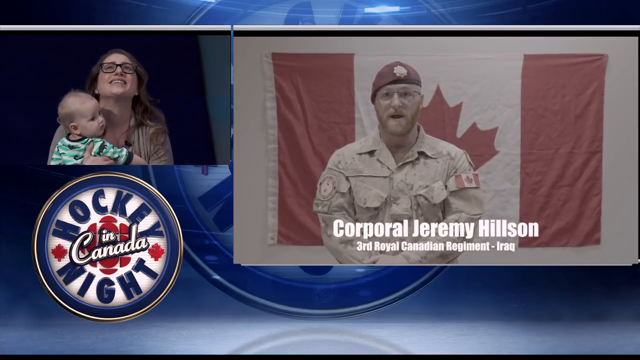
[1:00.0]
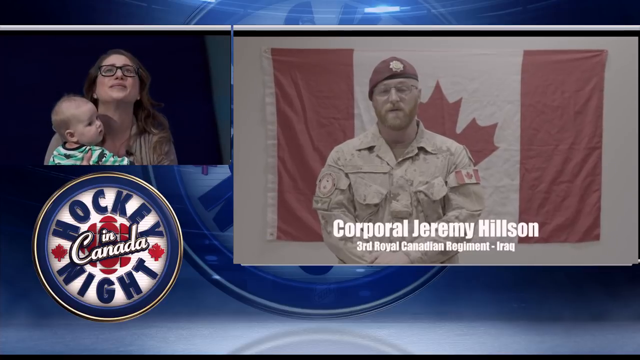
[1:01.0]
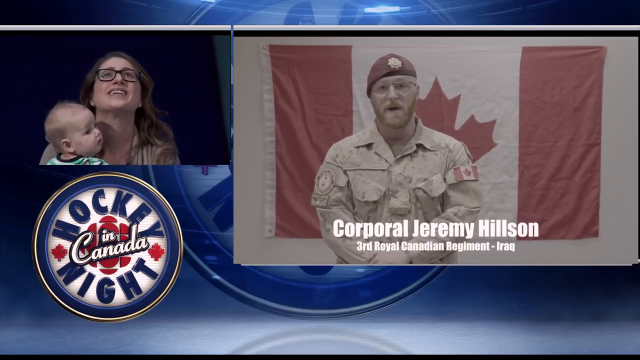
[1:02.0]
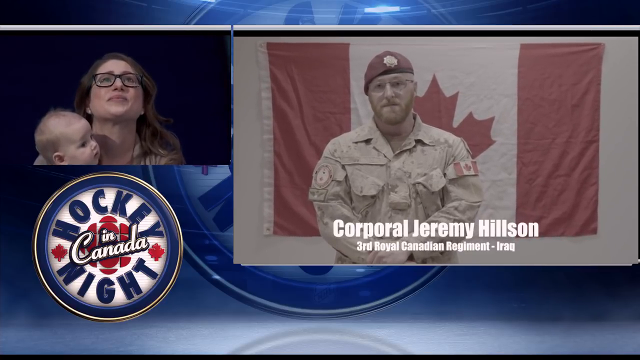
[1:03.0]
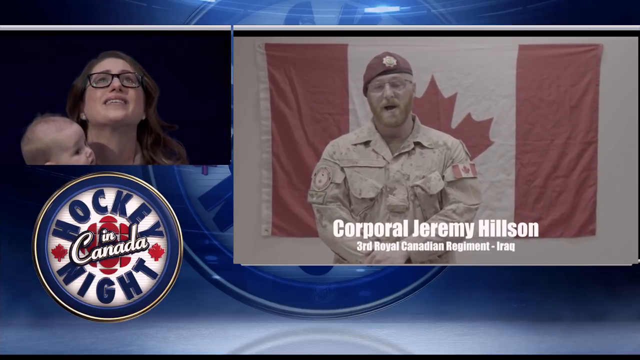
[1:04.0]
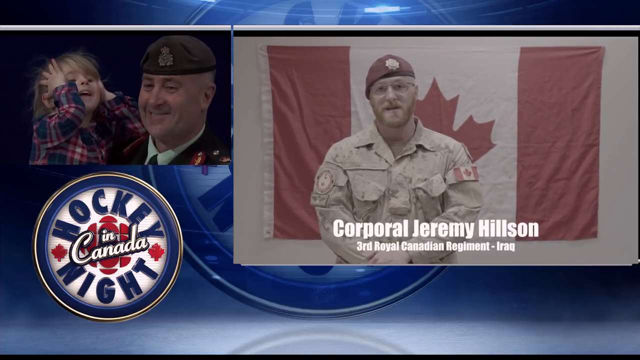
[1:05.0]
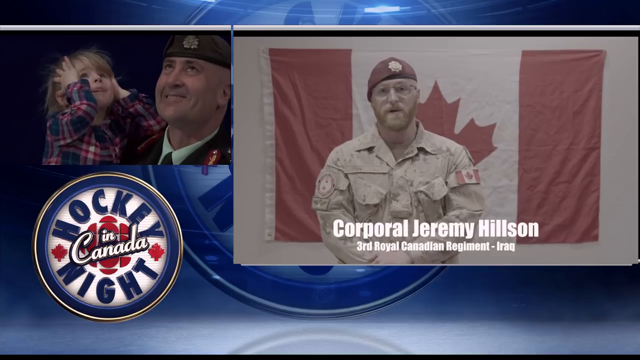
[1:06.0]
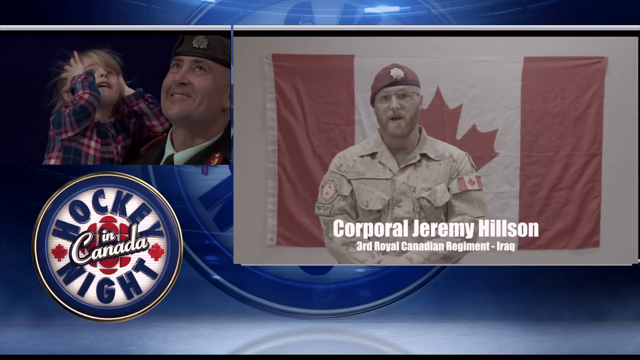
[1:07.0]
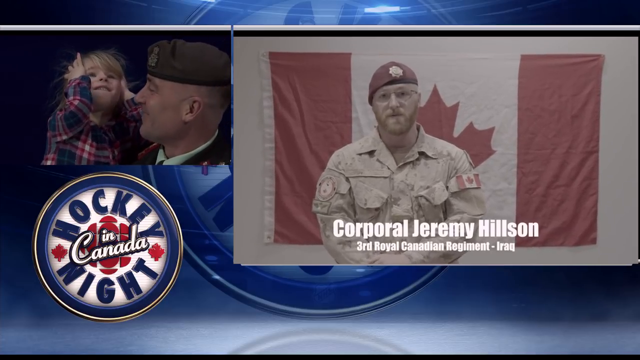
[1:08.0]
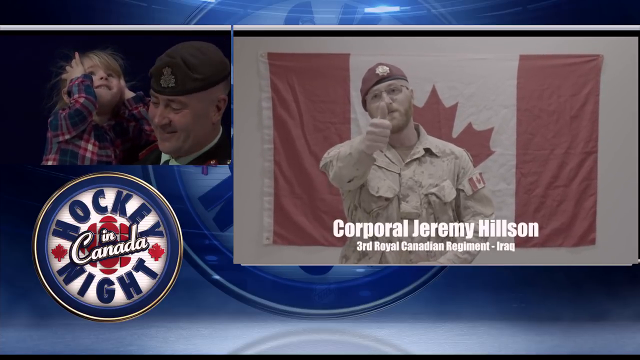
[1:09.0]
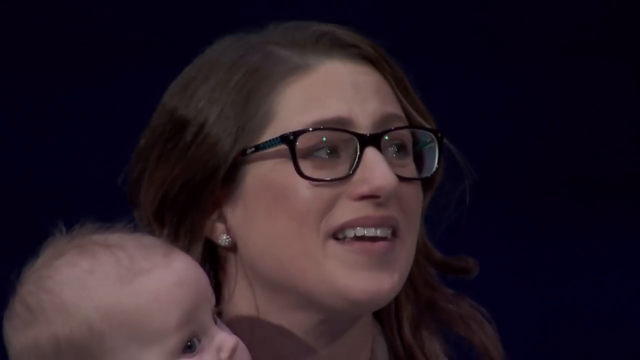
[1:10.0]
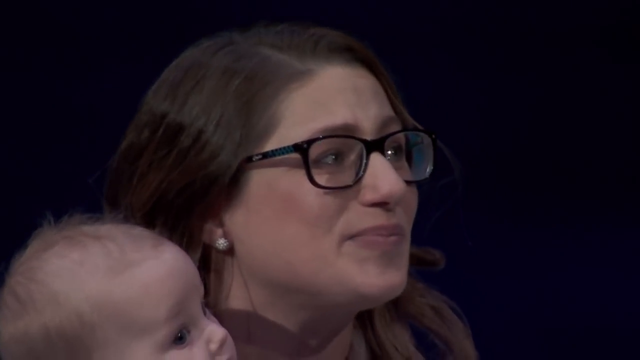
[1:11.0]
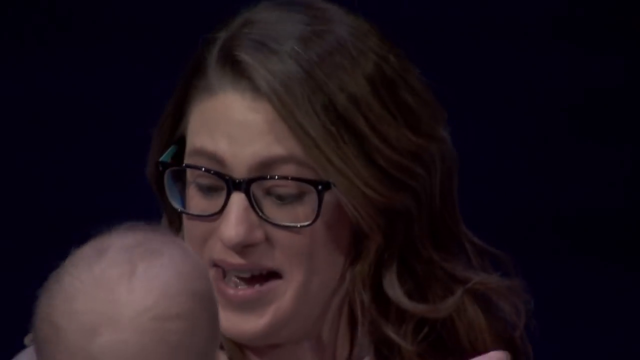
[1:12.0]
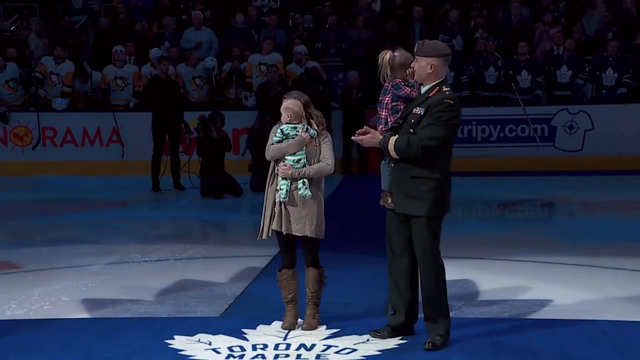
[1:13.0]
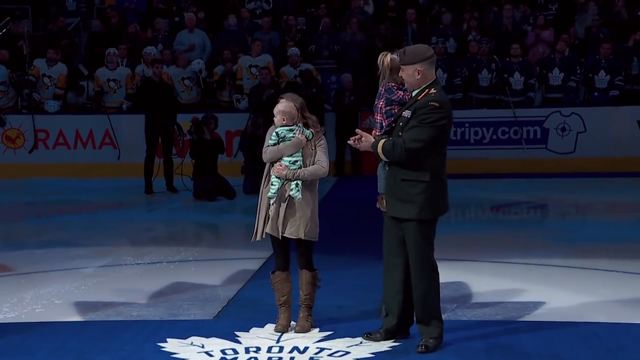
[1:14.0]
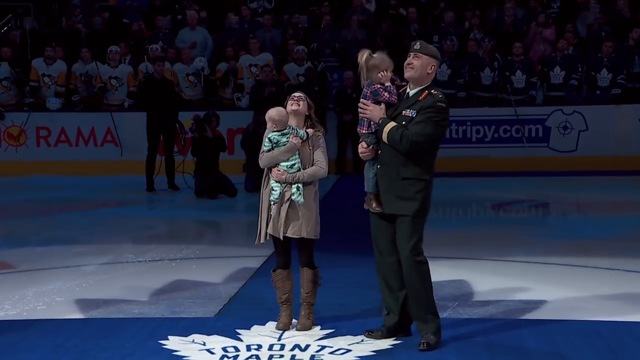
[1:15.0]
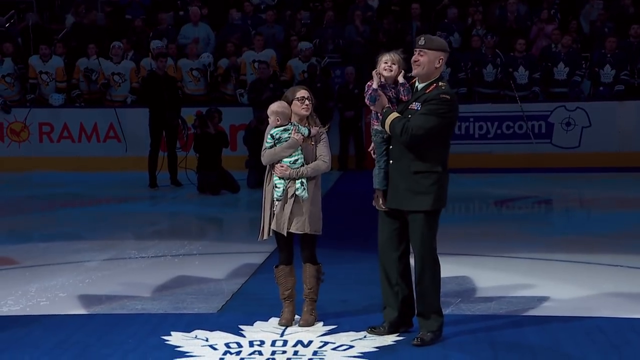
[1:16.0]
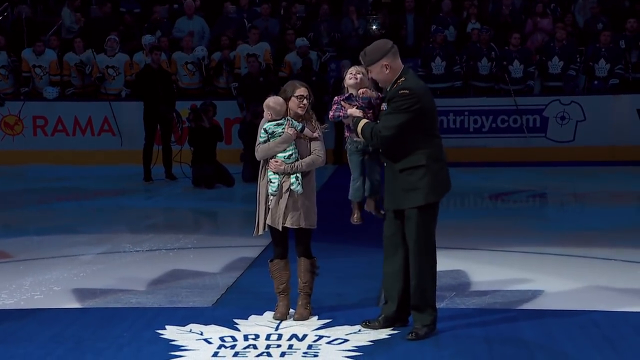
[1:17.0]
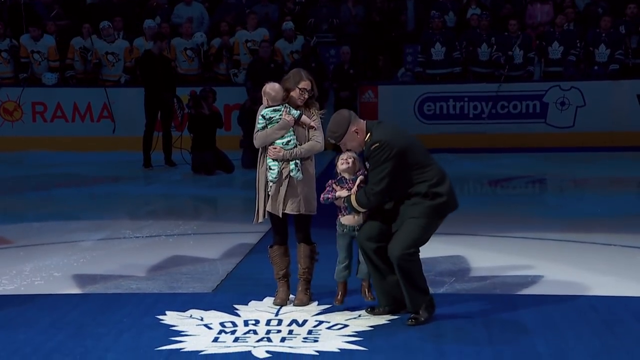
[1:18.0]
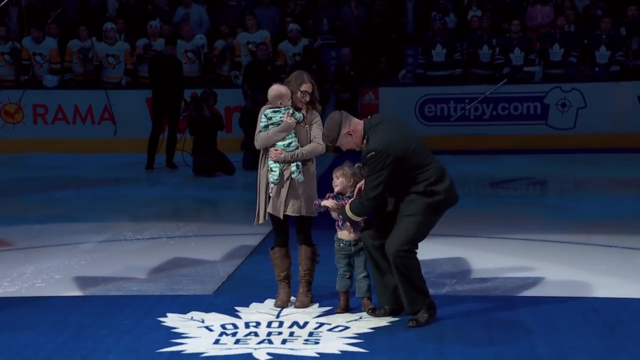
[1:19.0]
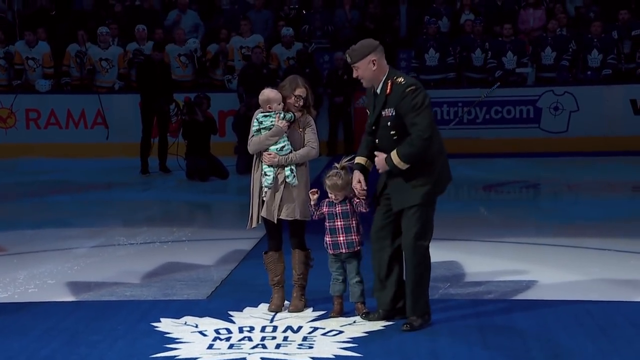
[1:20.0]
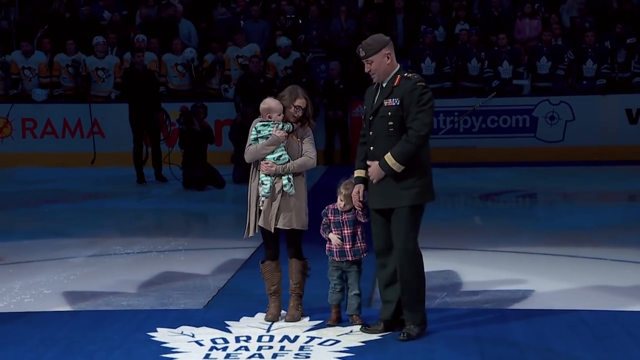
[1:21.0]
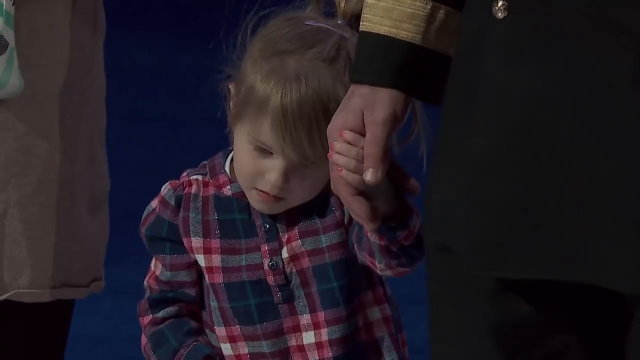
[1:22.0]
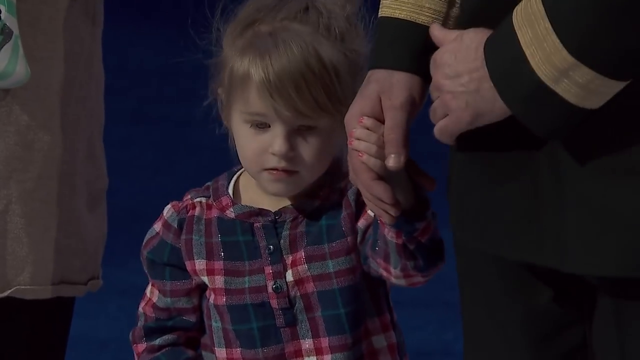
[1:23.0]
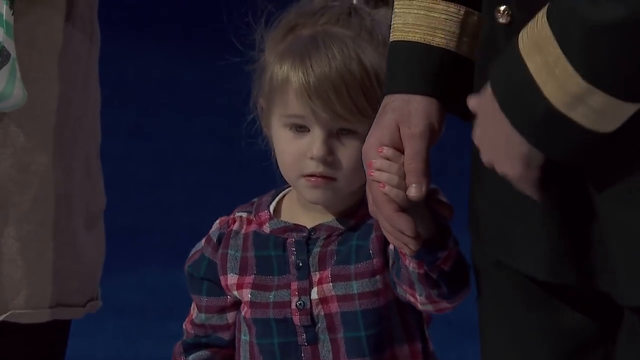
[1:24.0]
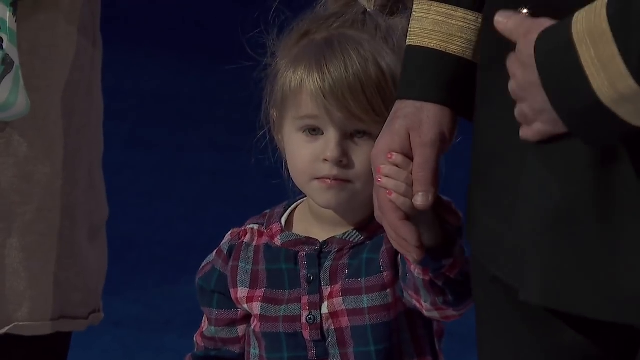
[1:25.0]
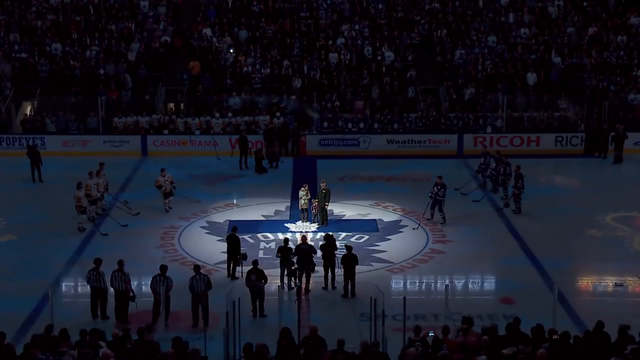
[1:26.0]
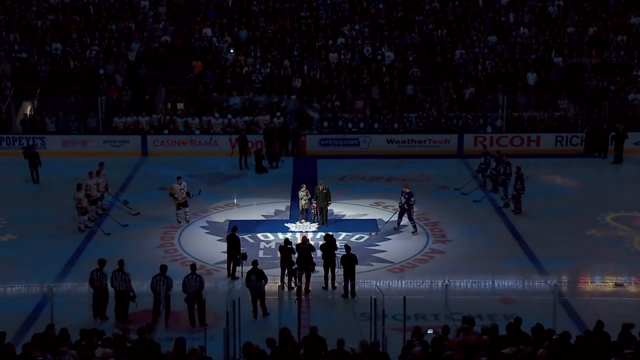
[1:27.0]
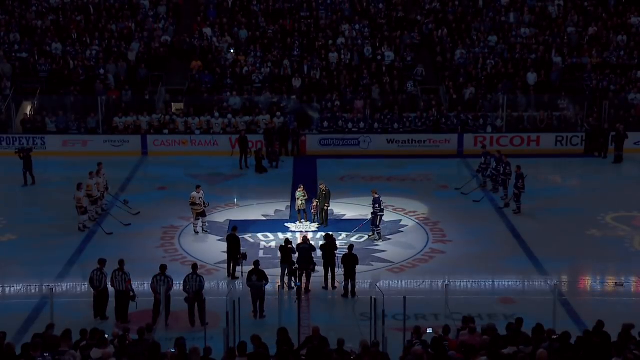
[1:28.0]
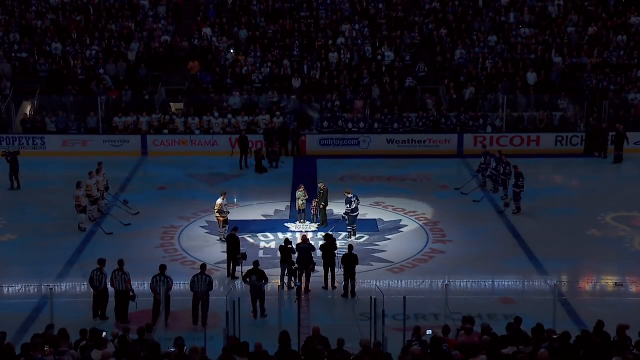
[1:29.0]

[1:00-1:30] The soldier wears a red beret tilted toward his right, down around his glasses, and a double-pocketed, long-sleeved camo top in a lighter tone covered with larger and smaller dark spots. A red and white Canadian maple leaf flag is on his left sleeve, and there is a round crest on his right shoulder and sleeve. His hands are clasped in front of him. As he speaks with his head tilted, the little girl looks up with her hands over her ears, and the man holding her smiles broadly. The woman tears up, tears welling in her eyes, as she looks over at the man. The baby looks at her mom briefly and then looks to the left. The mom wears a long beige long-sleeved top that extends into a dress, black tights, and brown cowboy boots. The man on the right puts the girl down, still holding her hand, and focuses on her. An aerial shot then shows them standing with the hockey players of both teams to the left and right, holding their sticks in front of them.